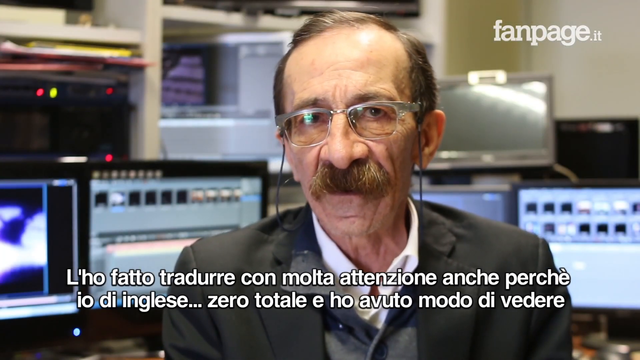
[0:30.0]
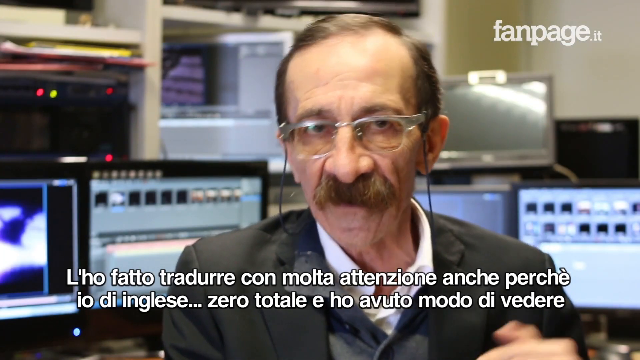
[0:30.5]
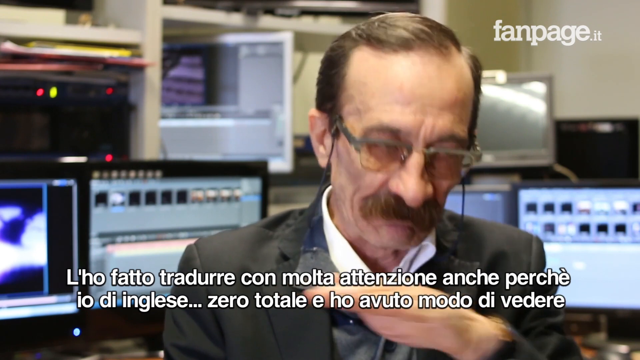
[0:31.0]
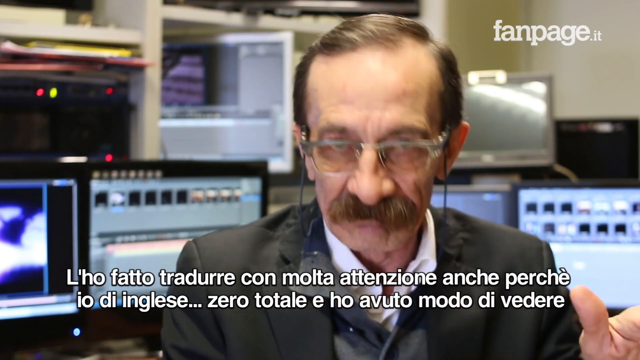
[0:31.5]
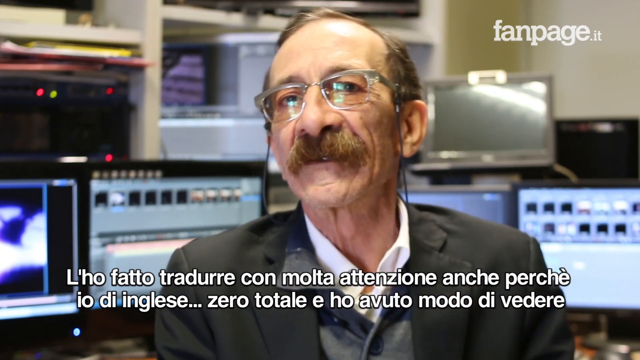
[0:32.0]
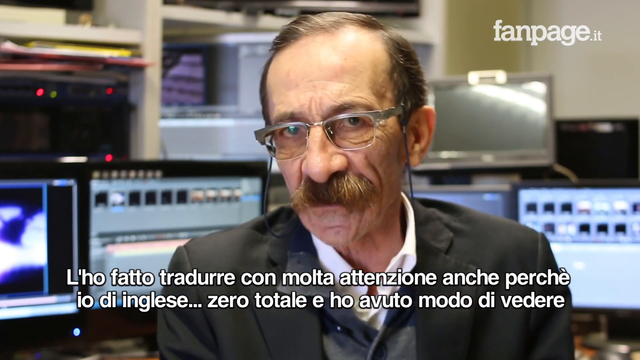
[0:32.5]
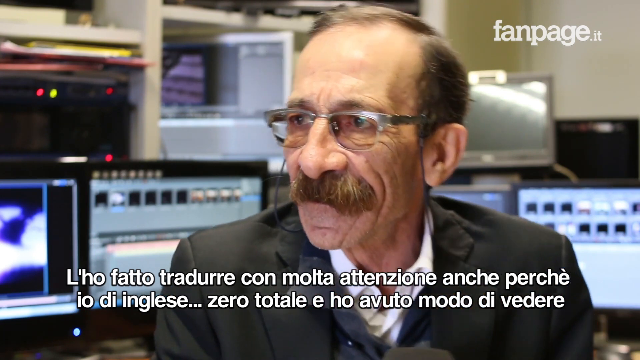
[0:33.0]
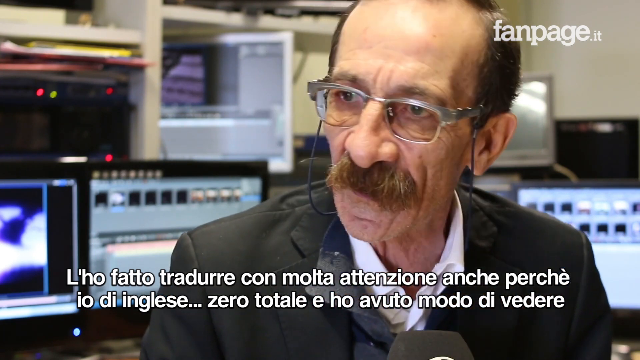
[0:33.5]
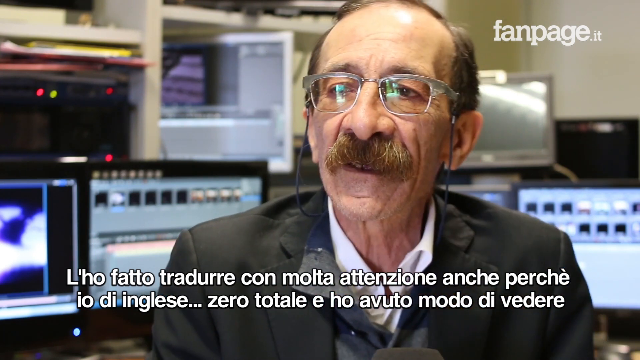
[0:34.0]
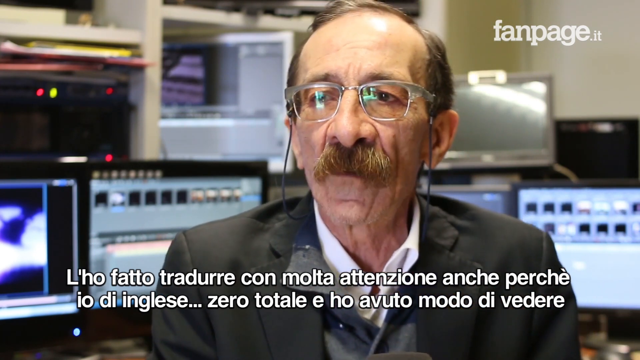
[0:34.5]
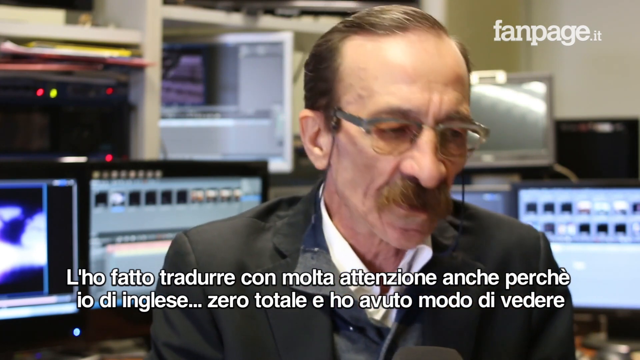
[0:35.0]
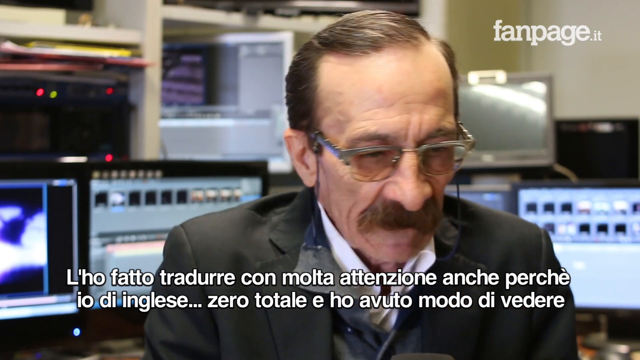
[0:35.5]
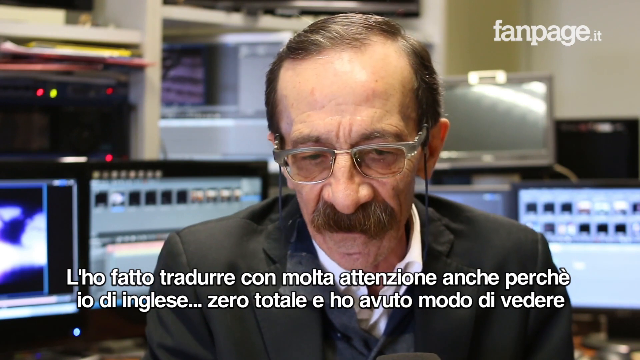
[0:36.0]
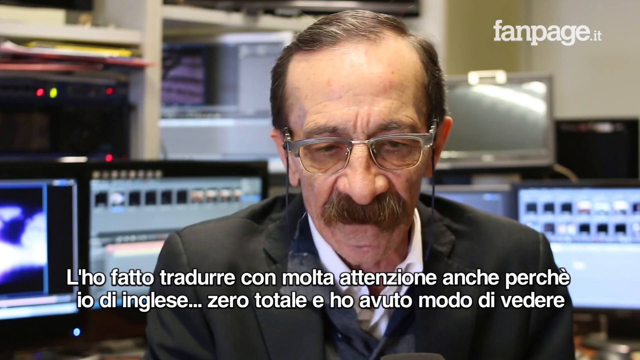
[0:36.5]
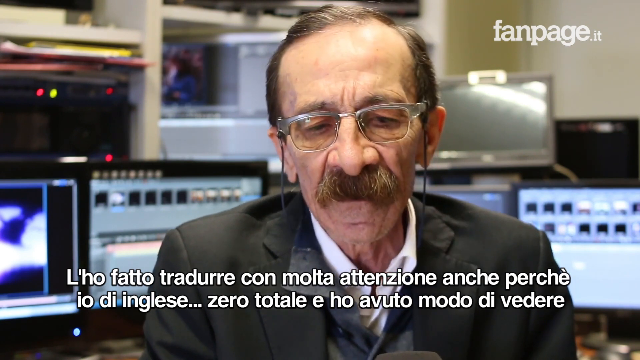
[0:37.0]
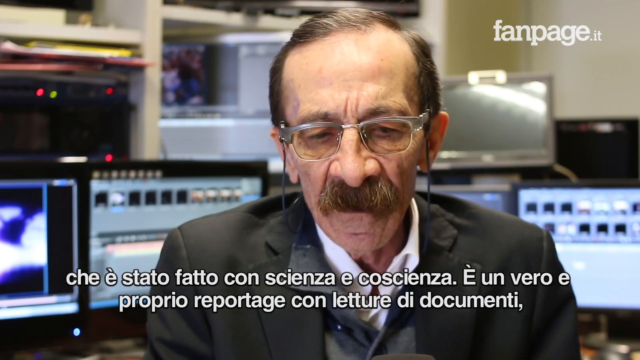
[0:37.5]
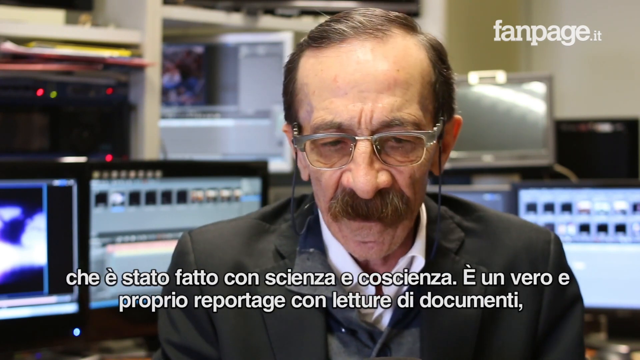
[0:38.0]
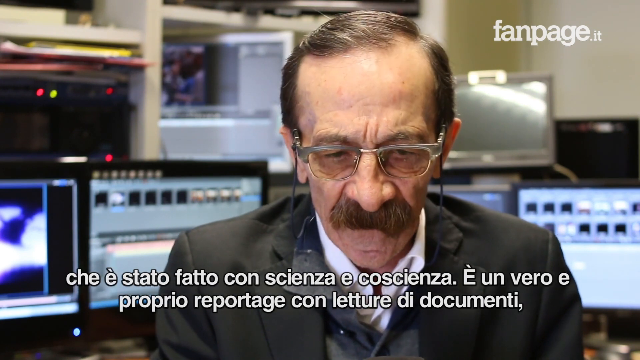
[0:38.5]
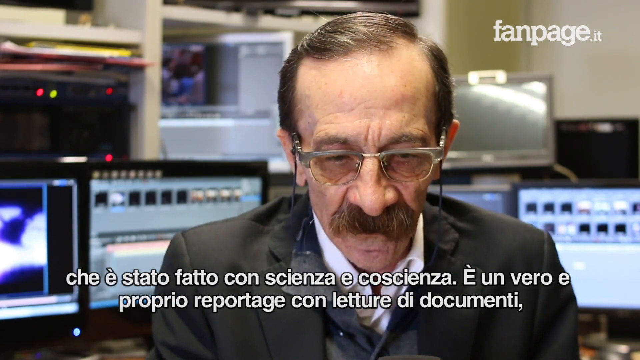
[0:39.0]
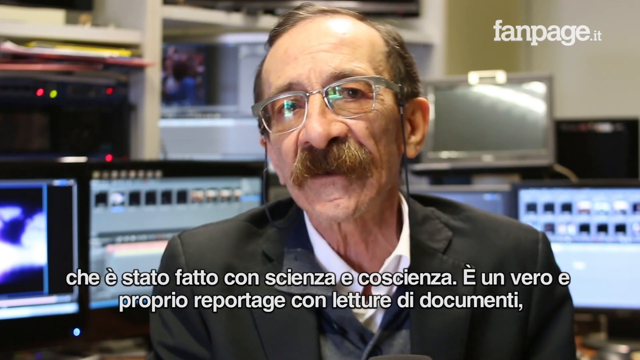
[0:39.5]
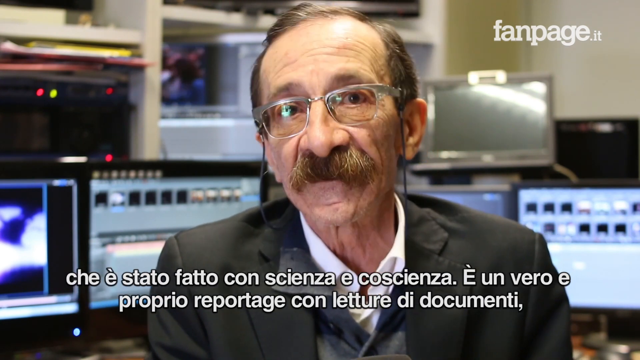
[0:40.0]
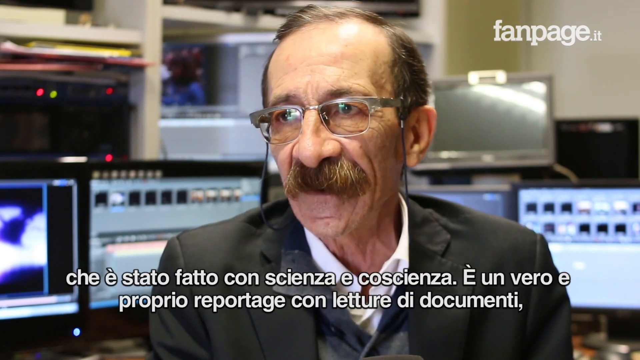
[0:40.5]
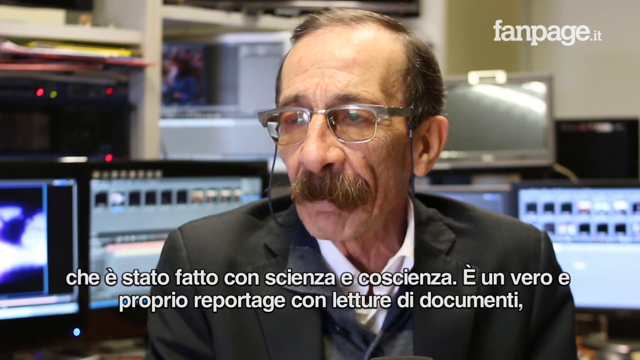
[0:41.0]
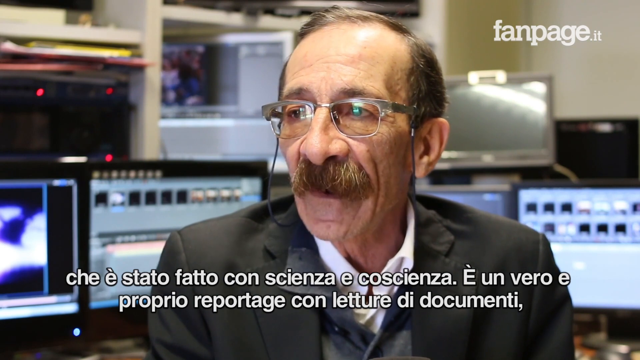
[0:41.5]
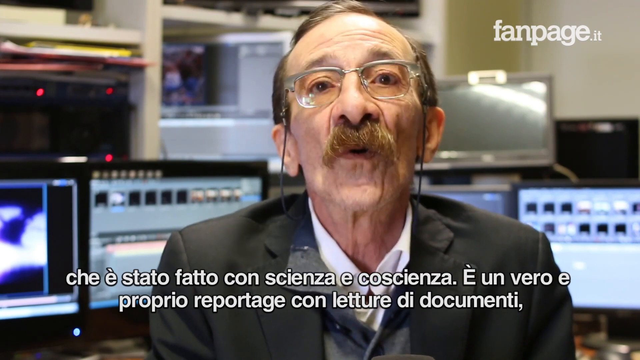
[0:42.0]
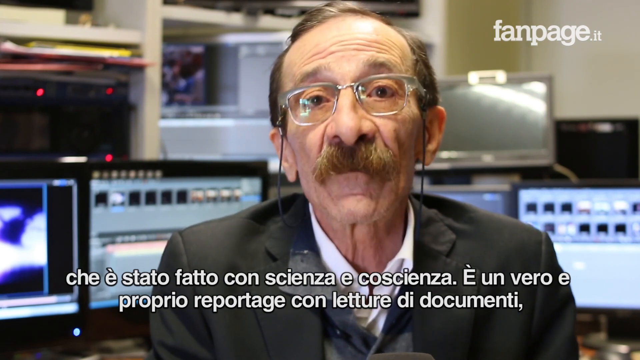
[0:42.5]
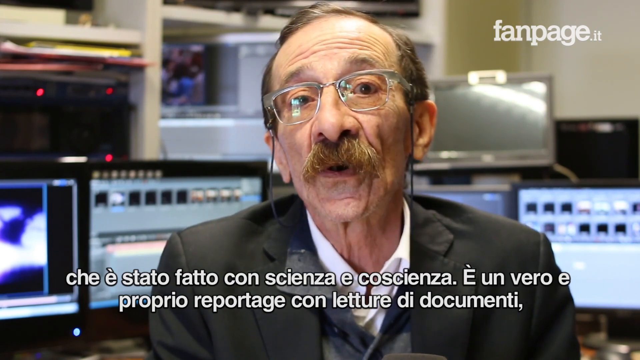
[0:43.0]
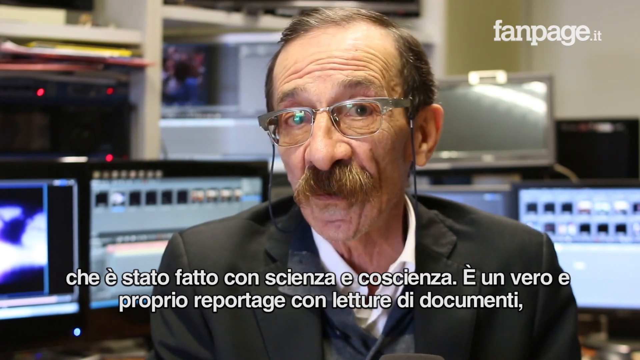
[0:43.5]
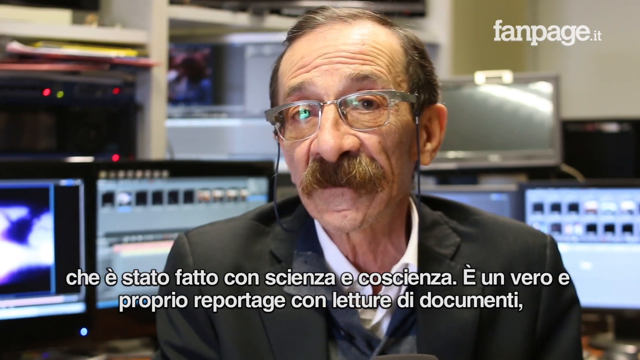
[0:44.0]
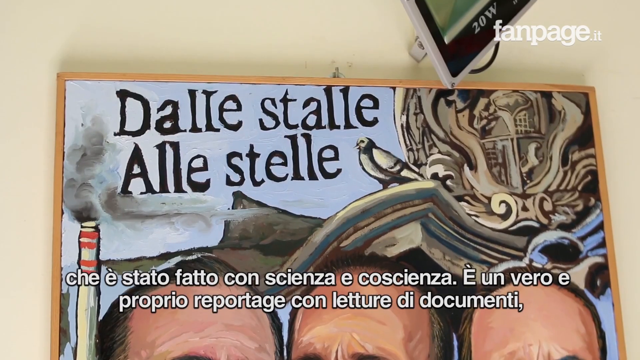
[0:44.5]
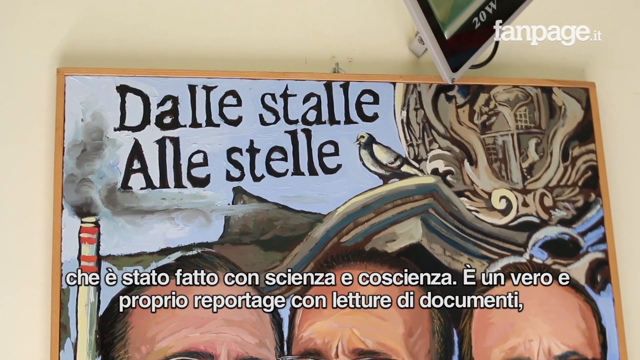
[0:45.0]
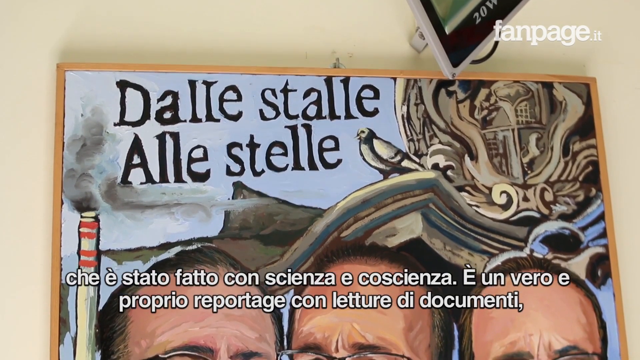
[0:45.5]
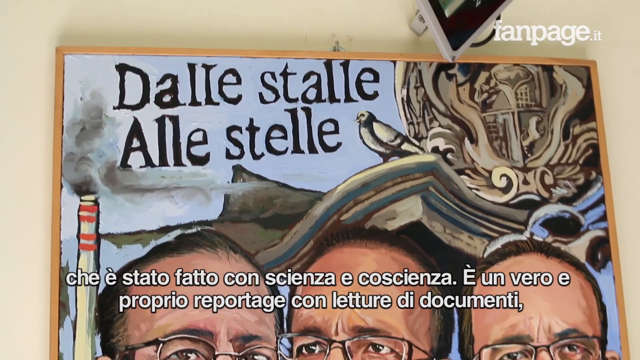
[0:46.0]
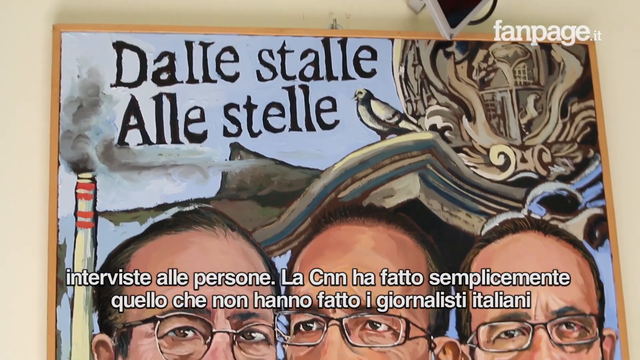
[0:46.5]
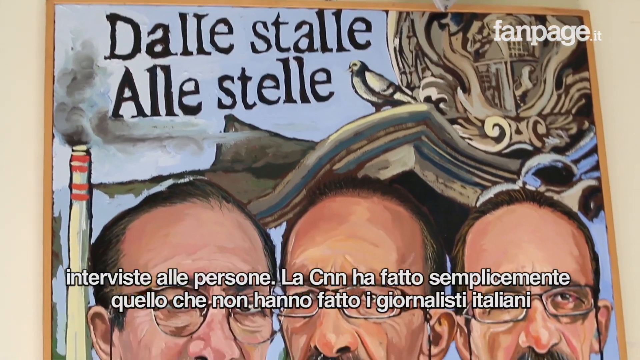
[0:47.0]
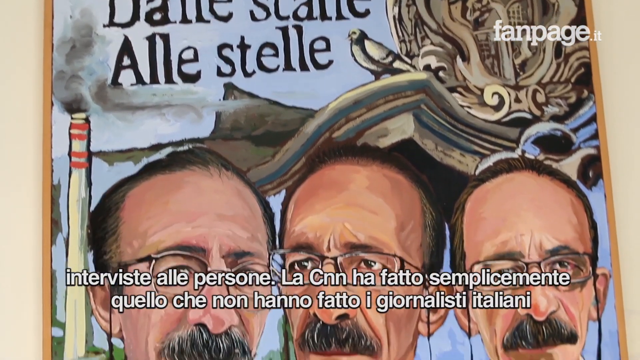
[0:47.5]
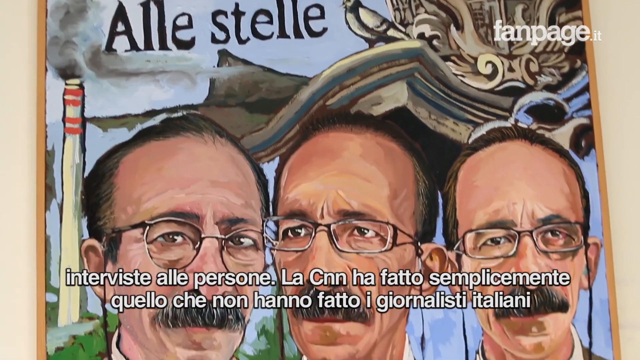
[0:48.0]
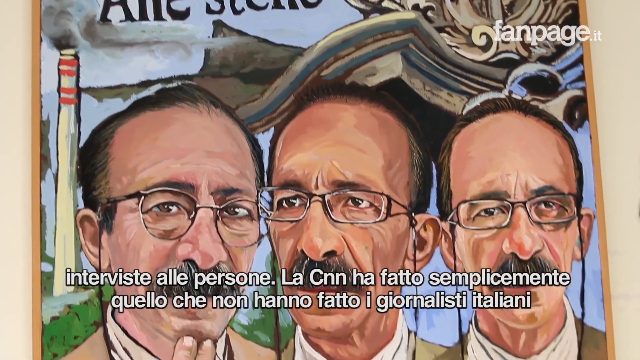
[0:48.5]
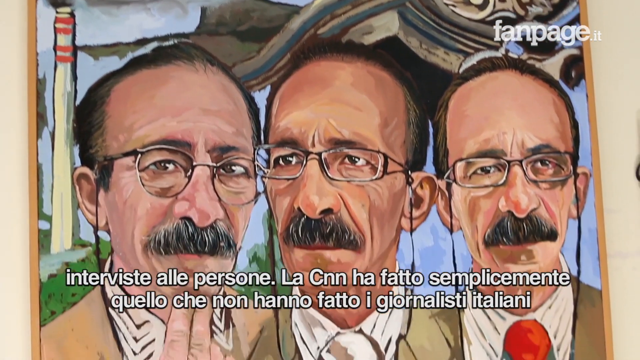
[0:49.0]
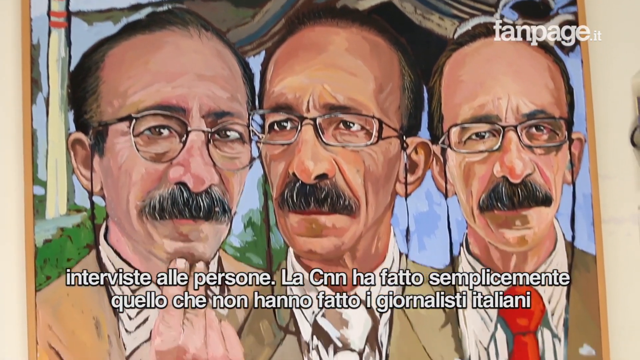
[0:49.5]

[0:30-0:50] The man, wearing tinted-lens glasses and with a large moustache but no beard, talks into the camera while Italian subtitles or information appear at the bottom of the screen. He shifts in his seat as he talks, moving forward toward the camera, then settling back and turning his body slightly to the left. His face lowers as he speaks, then he pulls back and raises his head again, looks to the right briefly, and focuses his eyes back on the camera, his mouth moving the whole time. The next scene shows a painting with text in a foreign language on it. The painting shows the same man three times; in each he wears his glasses and has the same distinctive moustache but wears different clothes. Behind him, on the left, is what appears to be a chimney with smoke coming out of it, and on the right some kind of column or balustrade with a bird perched on top.